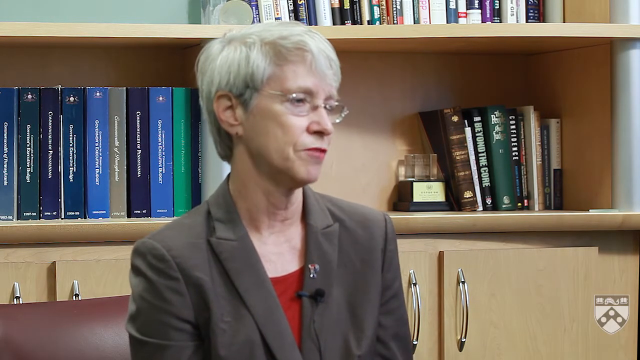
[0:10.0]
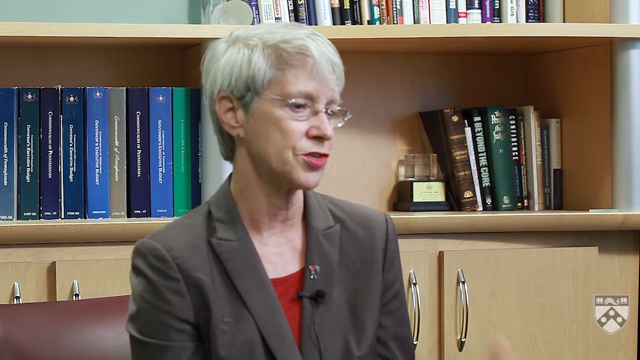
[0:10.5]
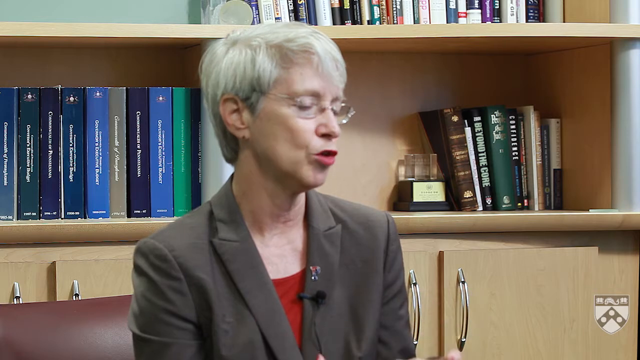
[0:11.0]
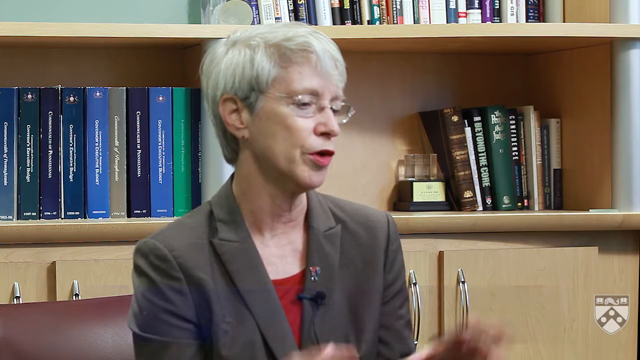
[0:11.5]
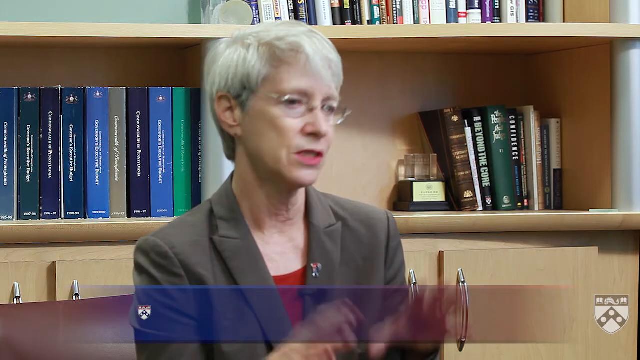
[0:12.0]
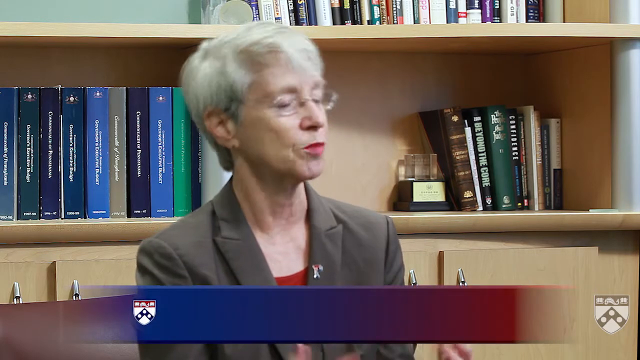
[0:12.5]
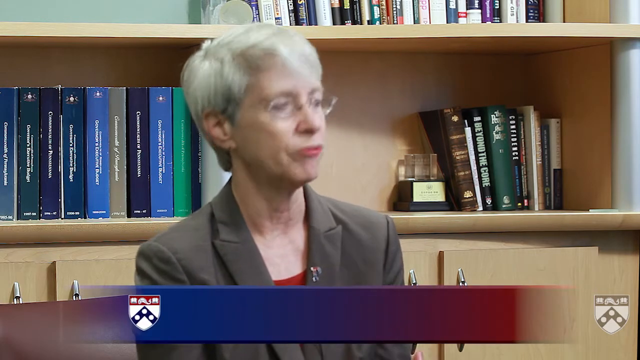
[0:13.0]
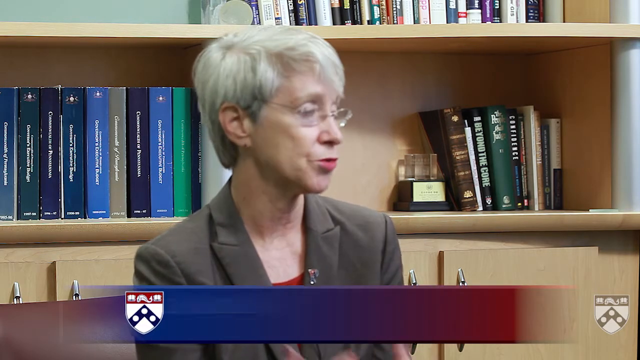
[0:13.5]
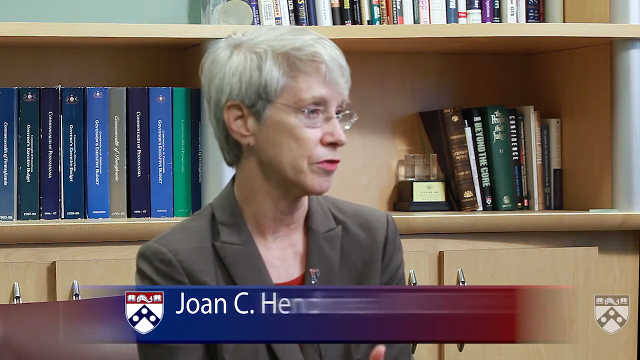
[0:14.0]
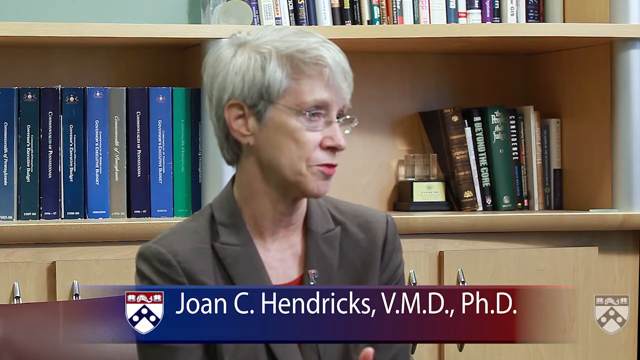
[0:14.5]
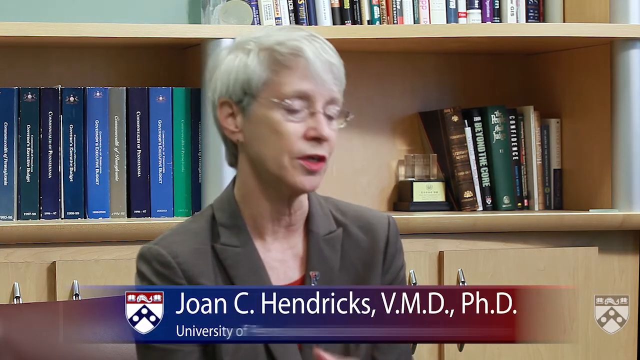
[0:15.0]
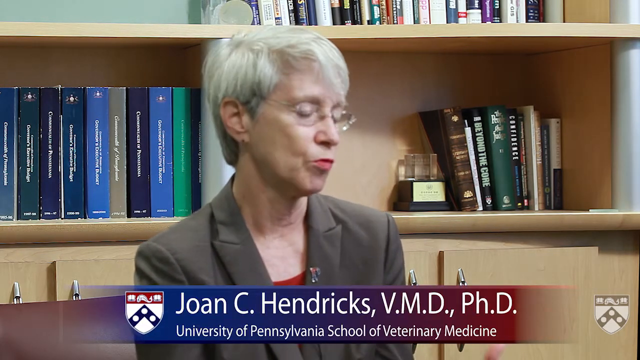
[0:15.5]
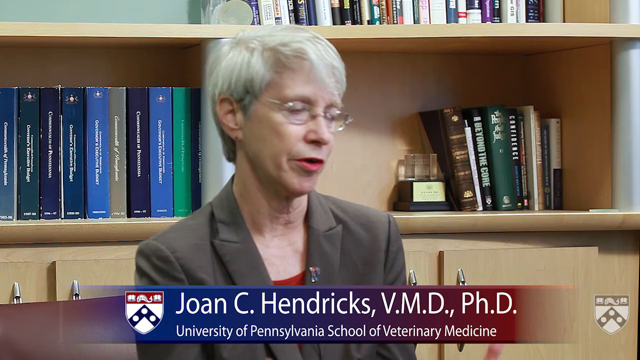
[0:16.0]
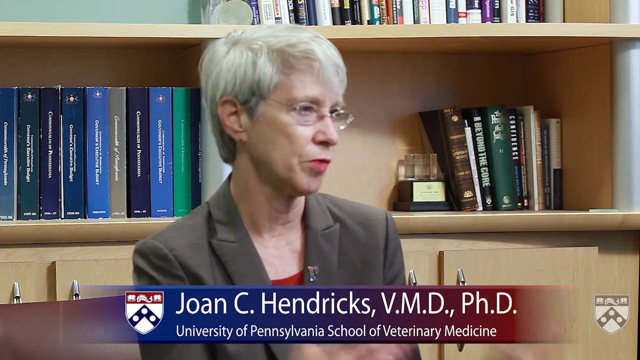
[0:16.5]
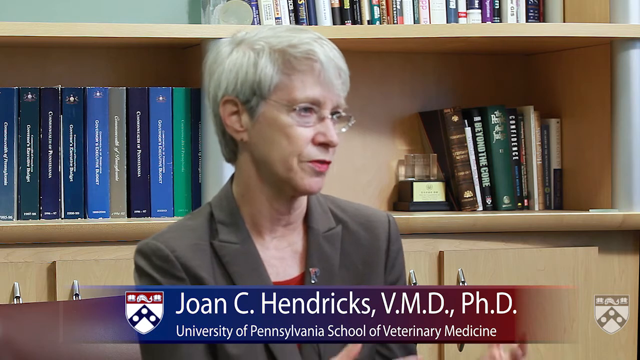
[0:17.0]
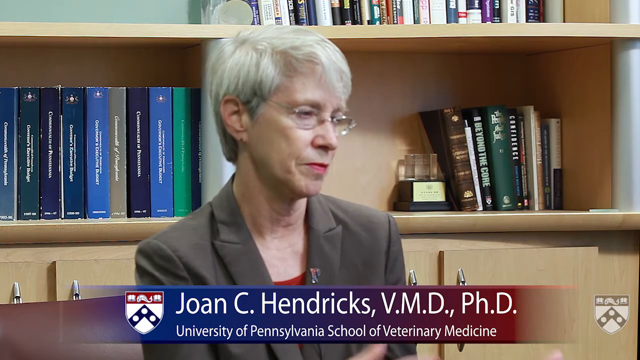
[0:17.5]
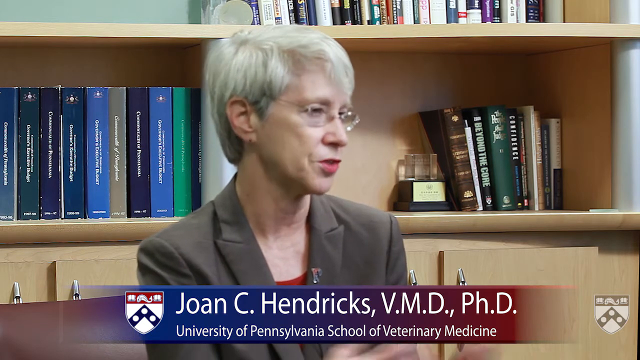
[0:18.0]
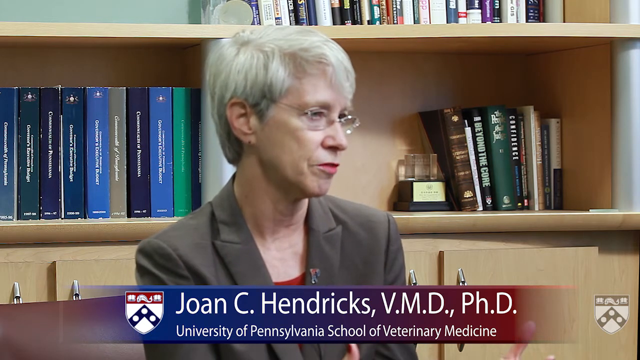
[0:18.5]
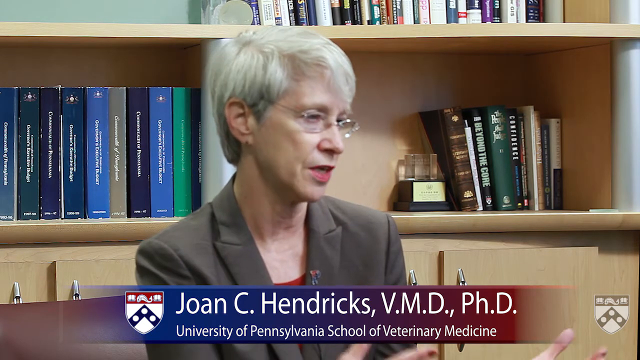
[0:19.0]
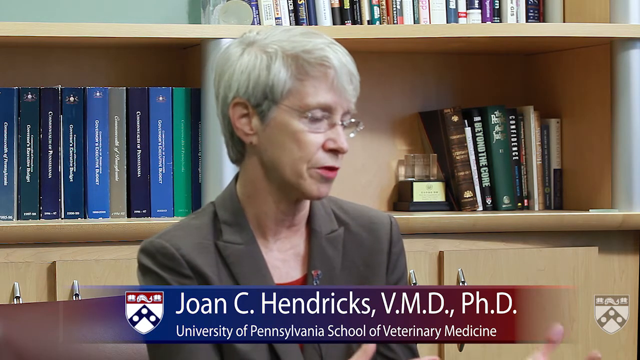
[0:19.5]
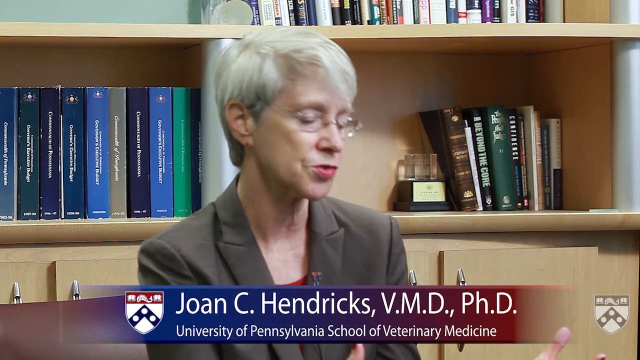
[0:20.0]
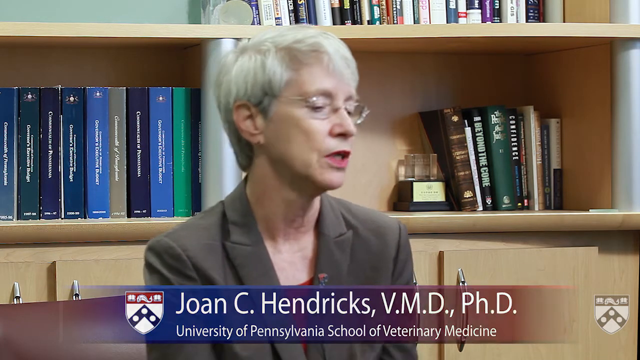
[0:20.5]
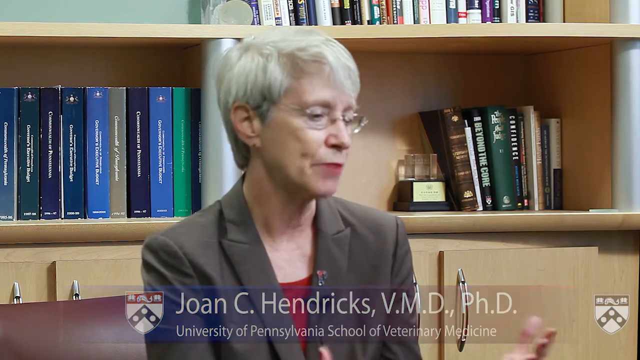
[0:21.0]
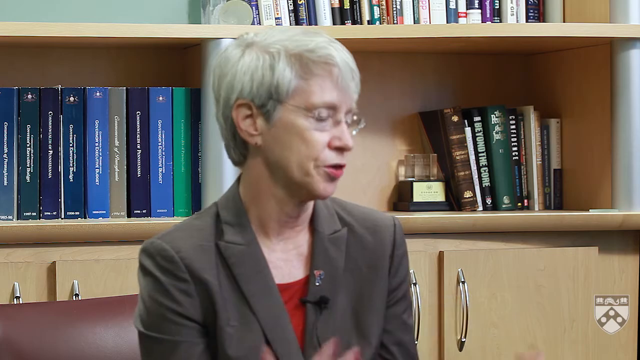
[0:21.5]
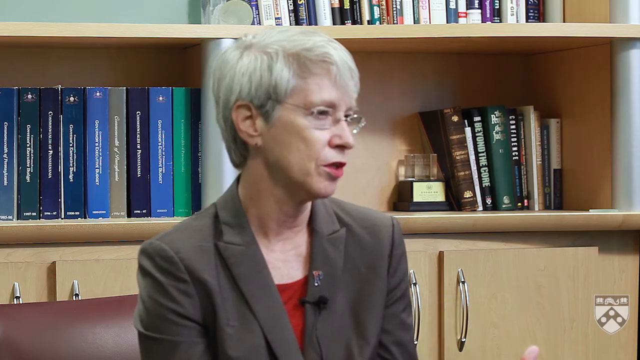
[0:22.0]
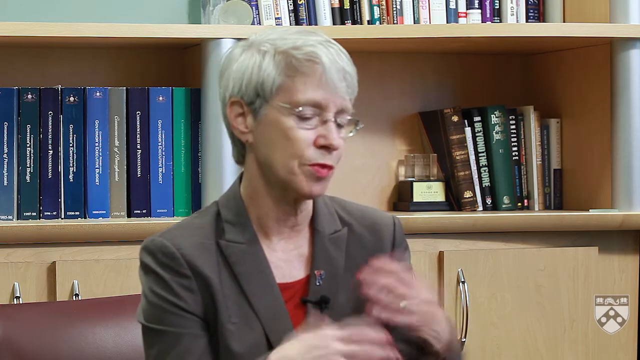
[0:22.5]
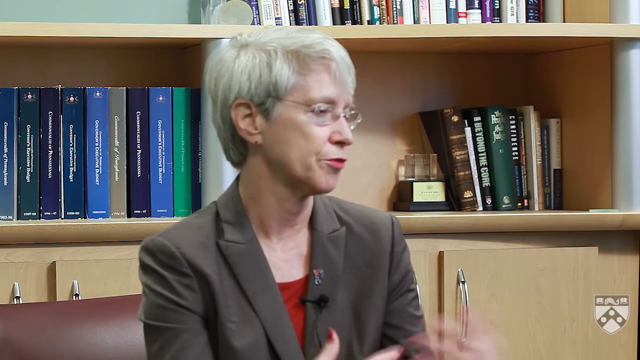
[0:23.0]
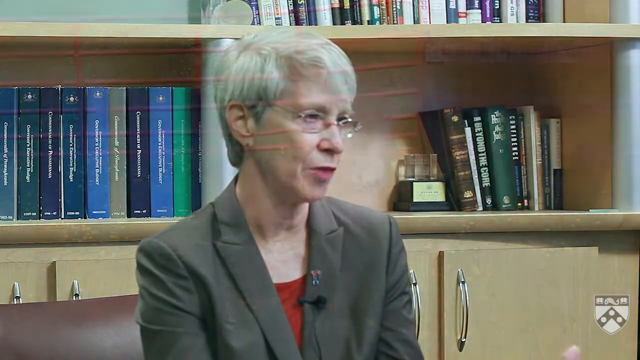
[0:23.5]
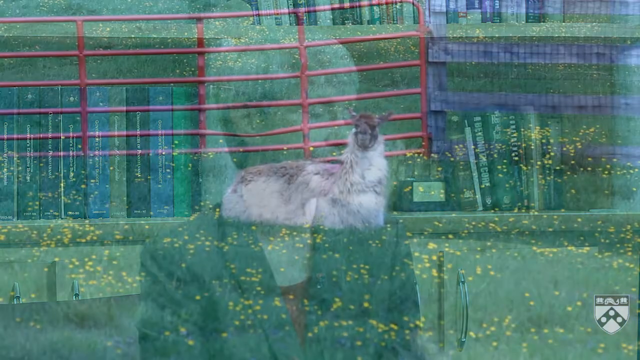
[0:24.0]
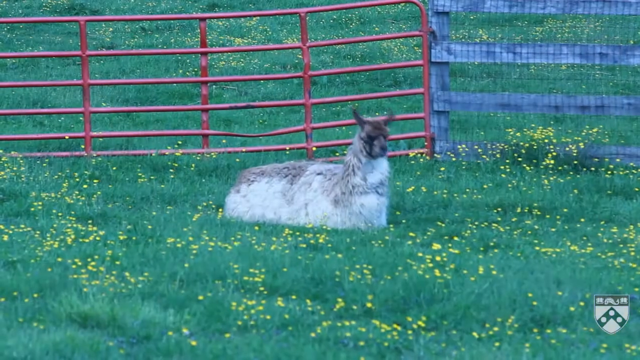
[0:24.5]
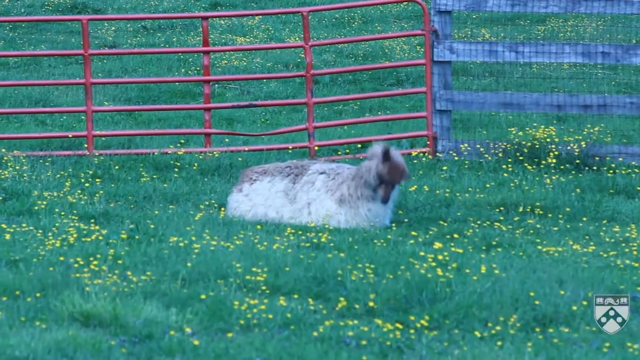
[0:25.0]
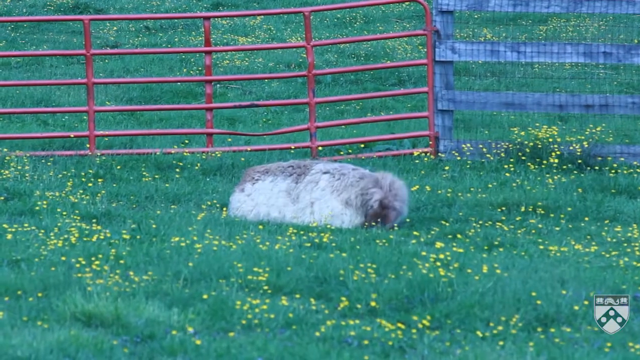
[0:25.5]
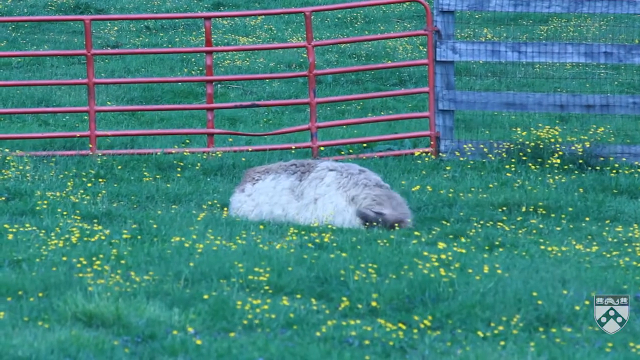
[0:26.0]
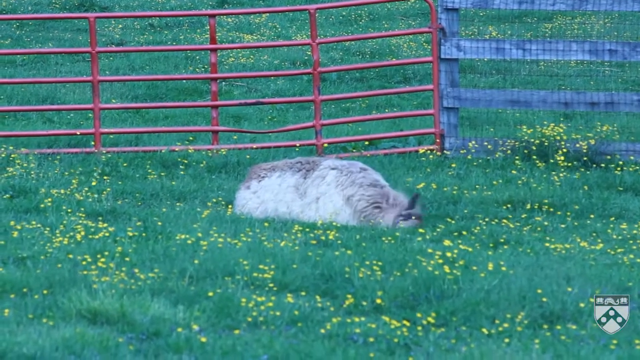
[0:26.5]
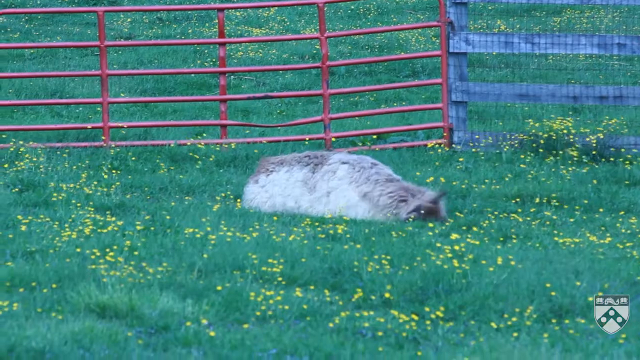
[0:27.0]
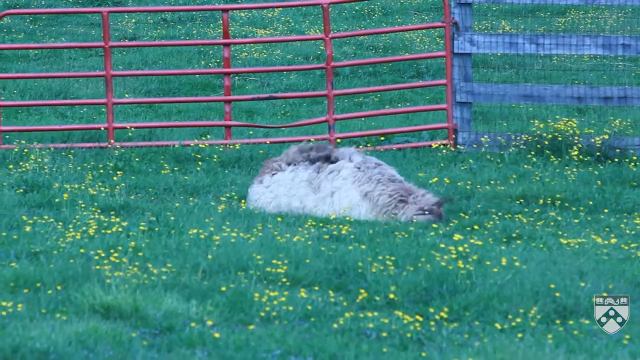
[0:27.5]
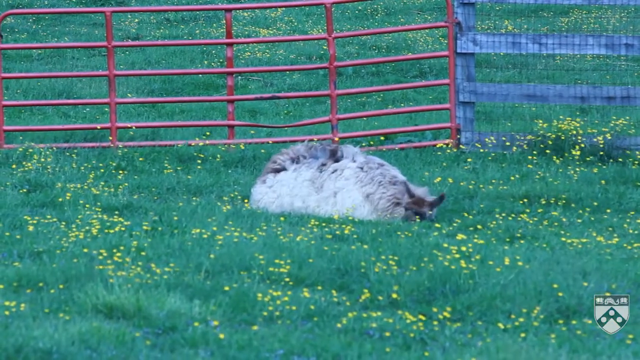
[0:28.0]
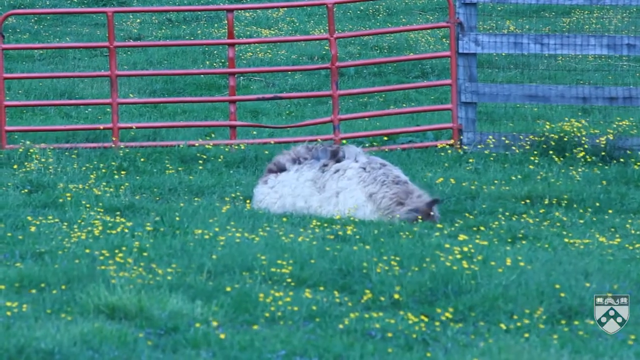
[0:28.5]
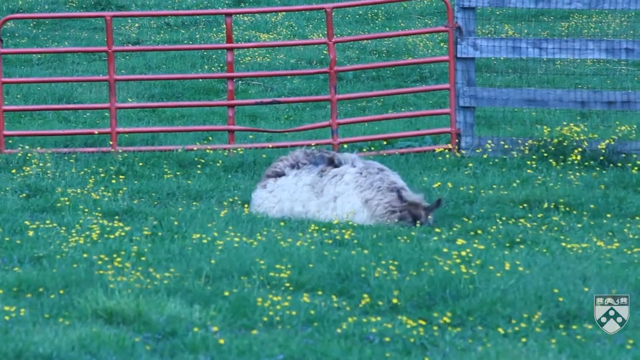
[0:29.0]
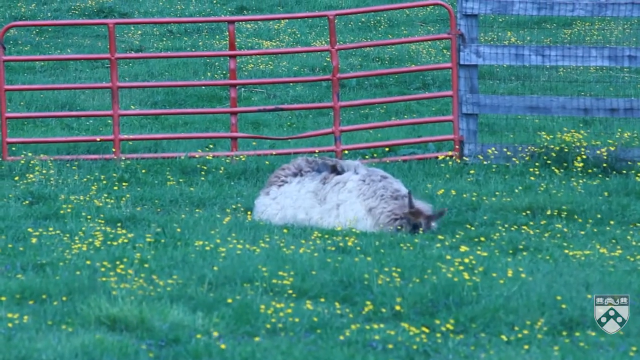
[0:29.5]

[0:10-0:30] A woman is interviewed while sitting in an office. Books are lined up behind her: big, thicker books to her left that seem to be from the same collection, books to her right, and books above her head, more to the right but also directly above her. She talks, and a caption reads "Joan C. Hendricks, VMD, PhD," identifying her as being from the University of Pennsylvania School of Veterinary Medicine. She kind of talks with her hands. The video then cuts to what looks like maybe a llama lying in a grassy field with yellow flowers. A red metal fence is in the background, and a blue, more cloth-like fence is on the right.